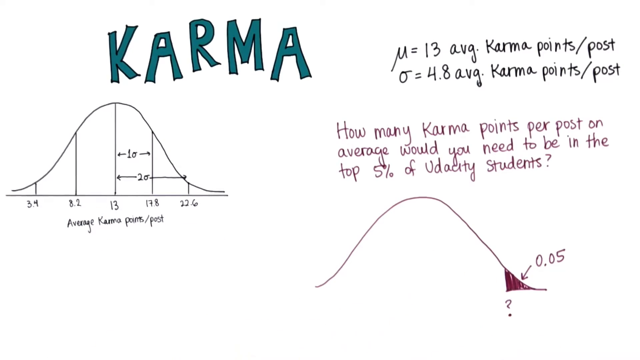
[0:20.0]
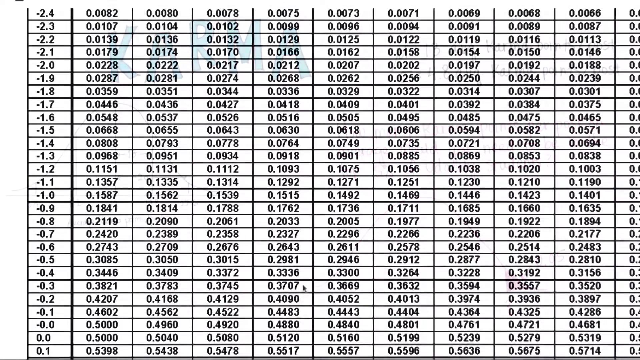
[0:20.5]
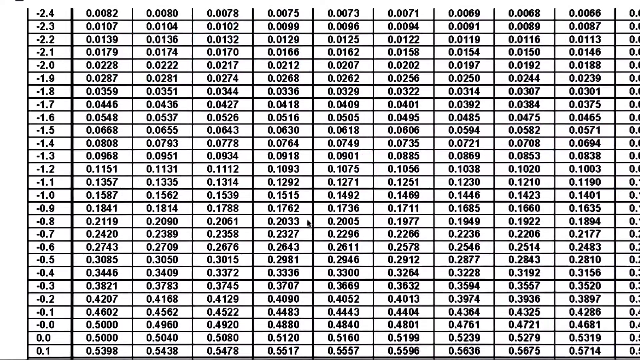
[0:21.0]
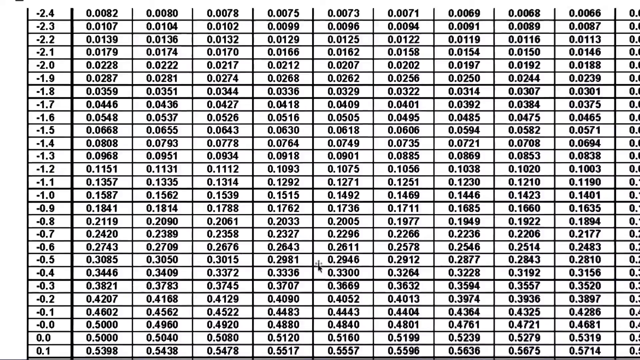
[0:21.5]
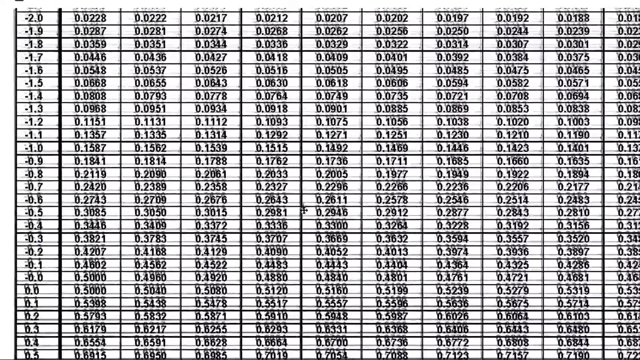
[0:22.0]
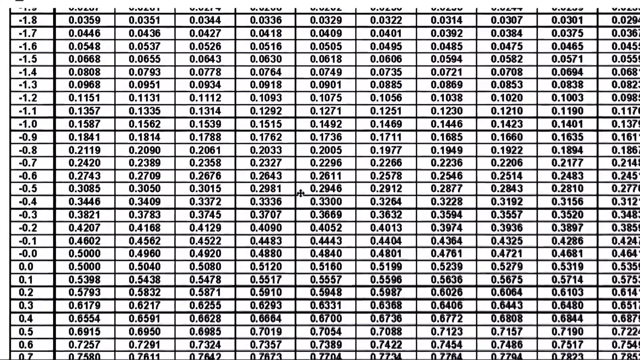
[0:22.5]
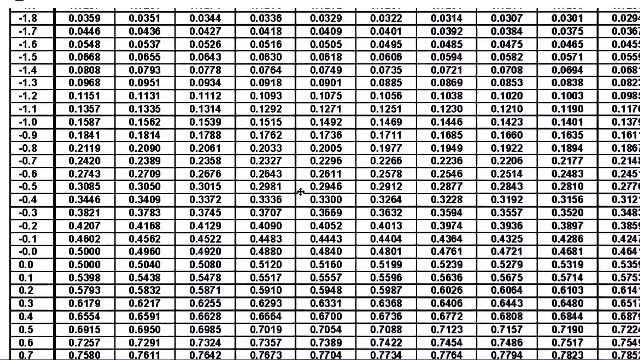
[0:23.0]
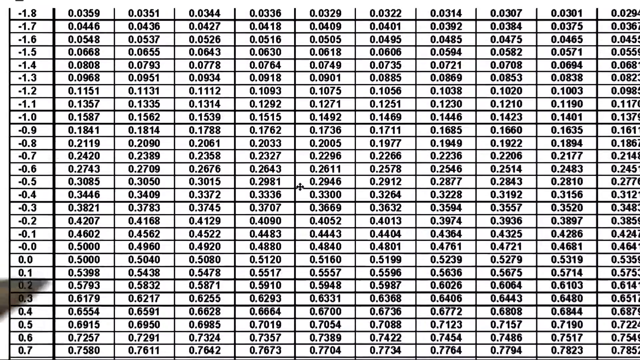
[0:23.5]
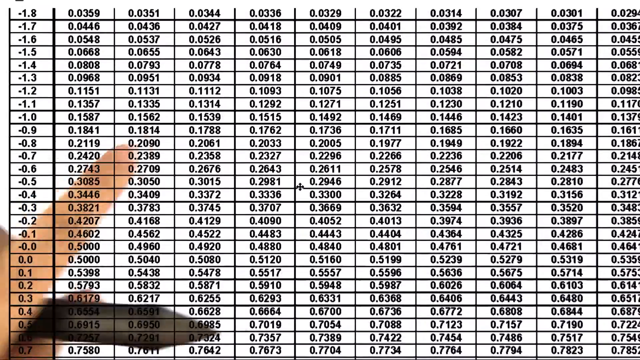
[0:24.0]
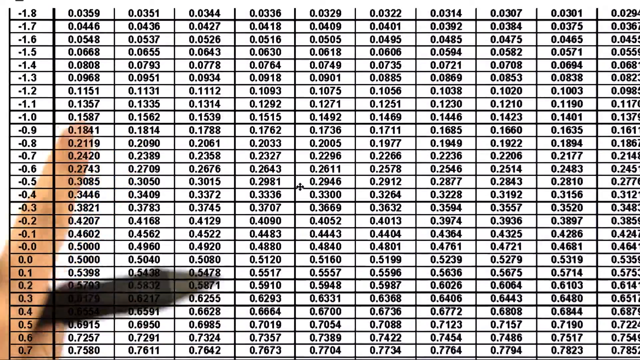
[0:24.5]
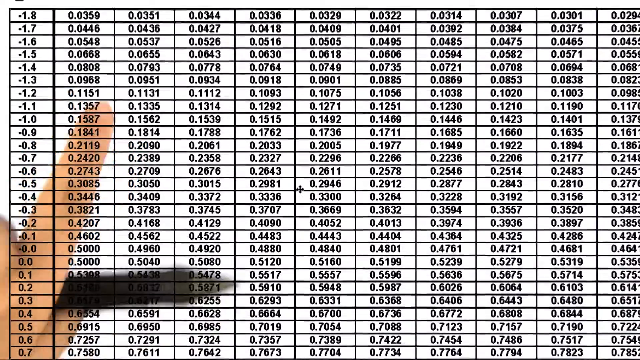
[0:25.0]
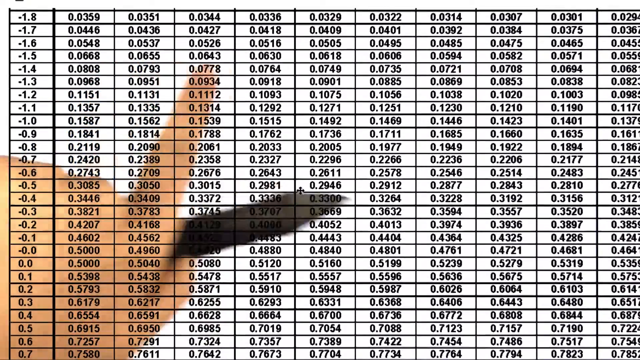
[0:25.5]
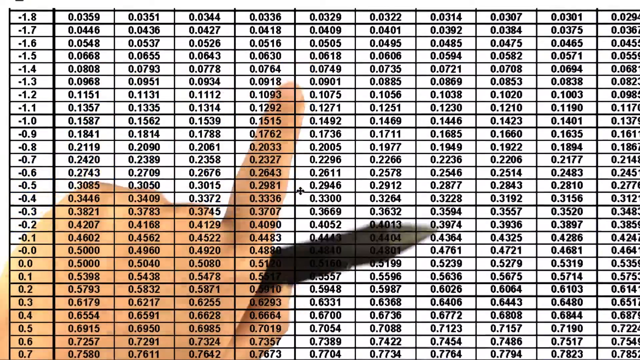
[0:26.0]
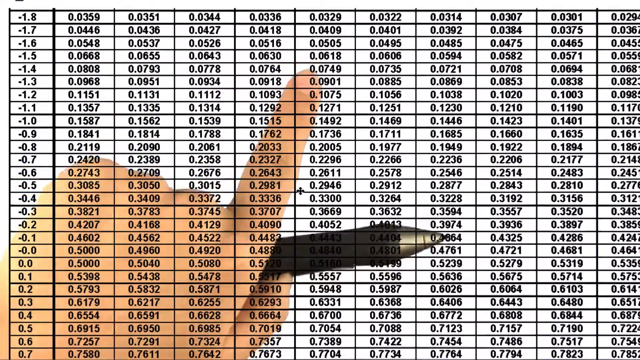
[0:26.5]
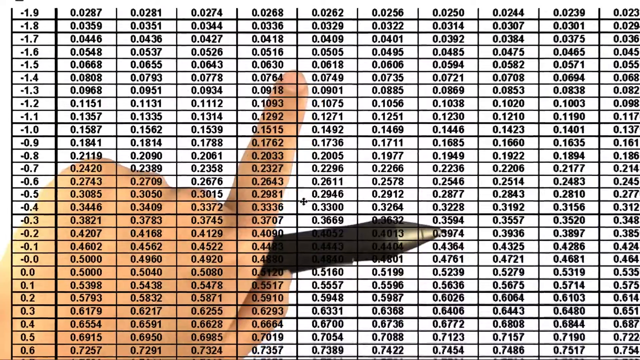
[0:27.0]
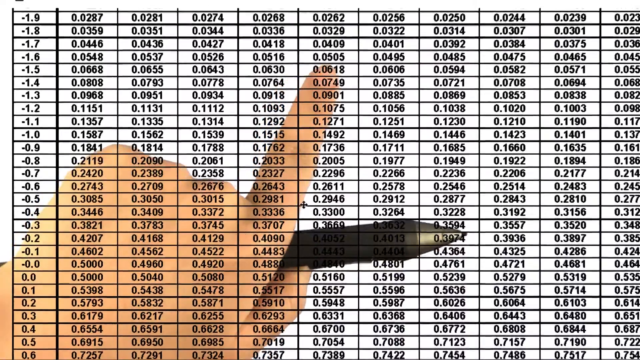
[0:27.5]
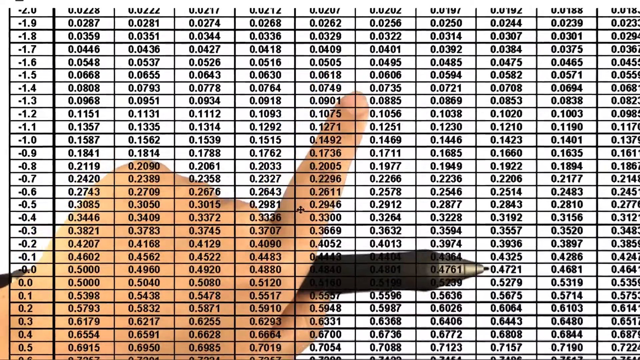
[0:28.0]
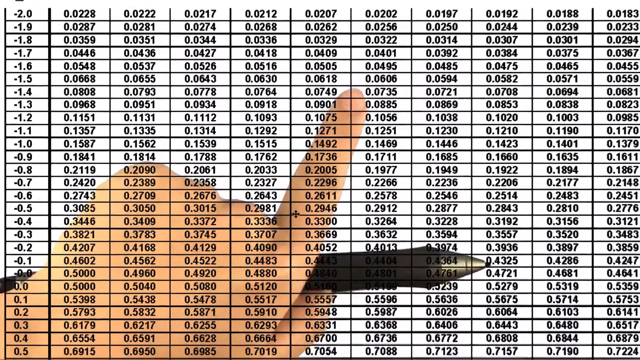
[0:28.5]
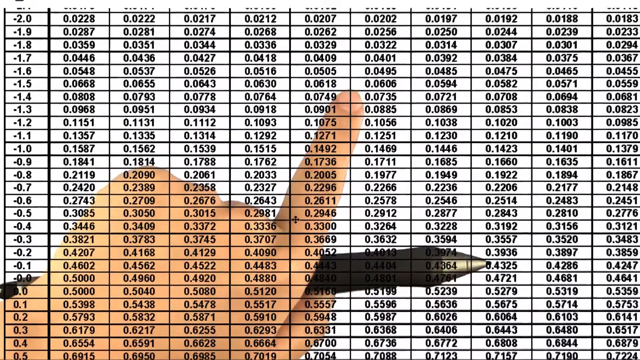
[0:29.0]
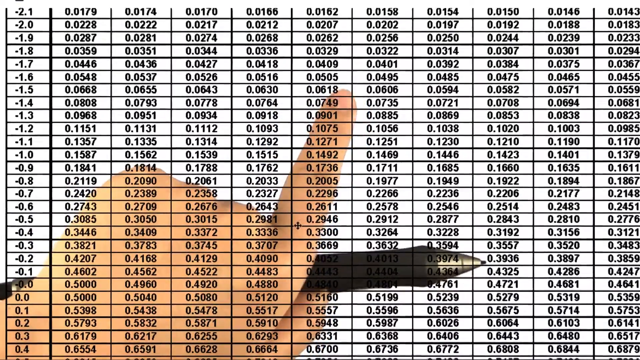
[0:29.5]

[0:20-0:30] The assignment shows the word "karma" in a light blue font. It reads that U equals 14 average karma points and that O is 4.8 average karma points per post, followed by the text "how many karma points per post on average would you need to be in the top 5 of Udacity students." On the left is a graph he created, running from 3.4 to 22.6, with the middle average at 13. He proceeds to draw another graph, marks 0.05 at the bottom right, and then puts down a long sequence of numbers from 0.0359 to 0.722.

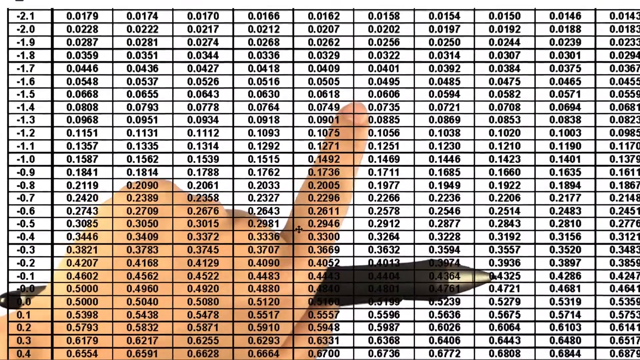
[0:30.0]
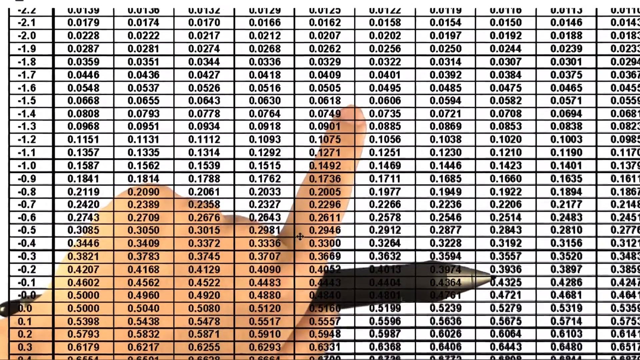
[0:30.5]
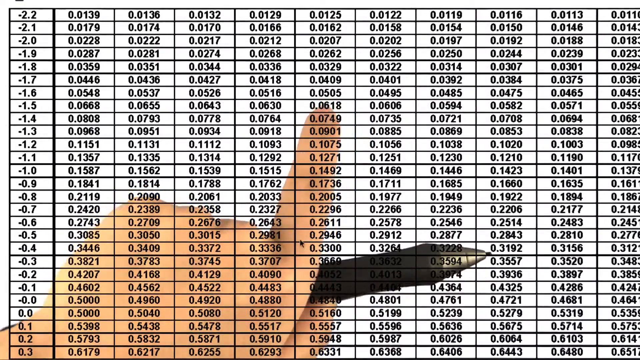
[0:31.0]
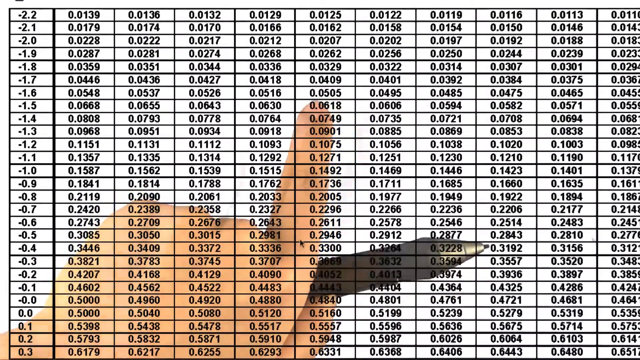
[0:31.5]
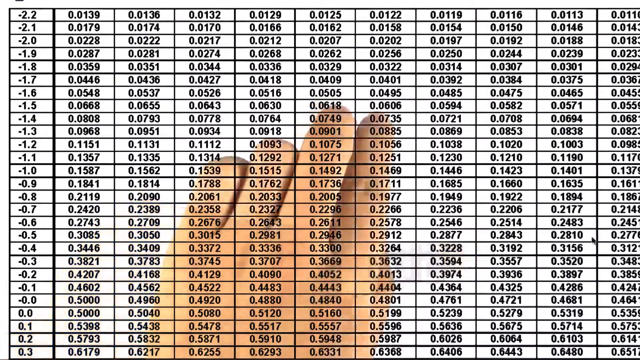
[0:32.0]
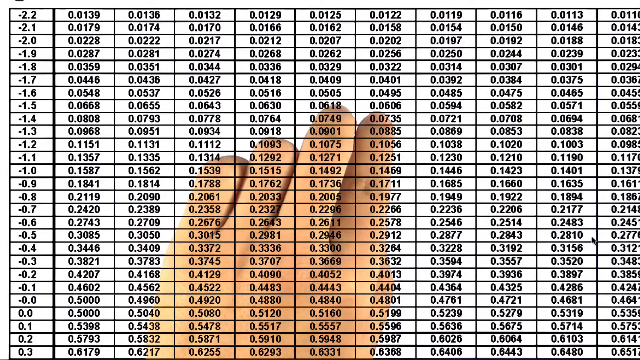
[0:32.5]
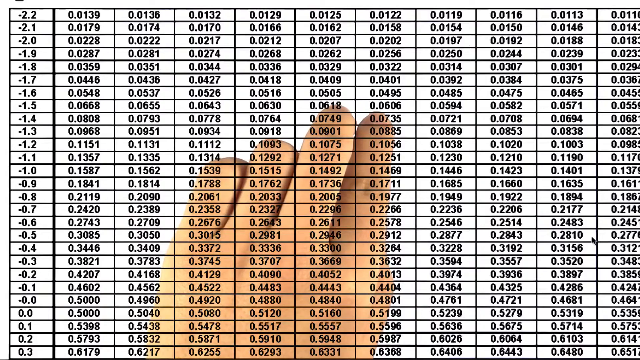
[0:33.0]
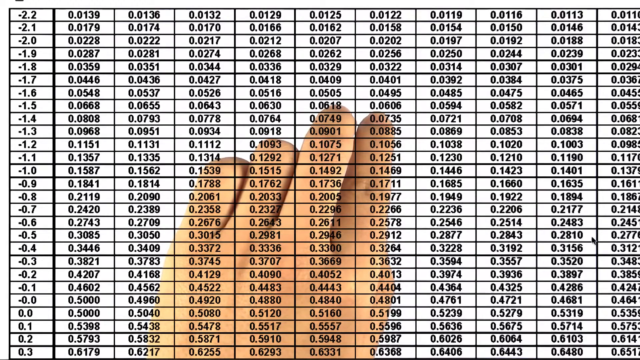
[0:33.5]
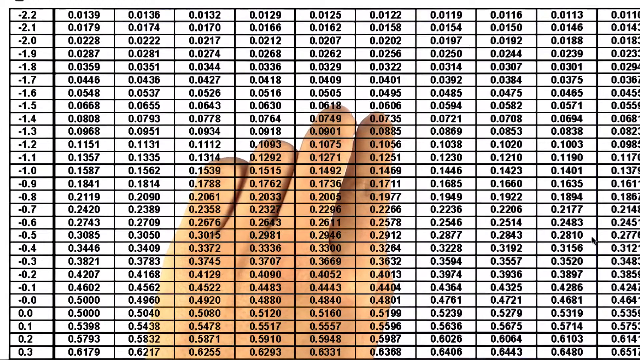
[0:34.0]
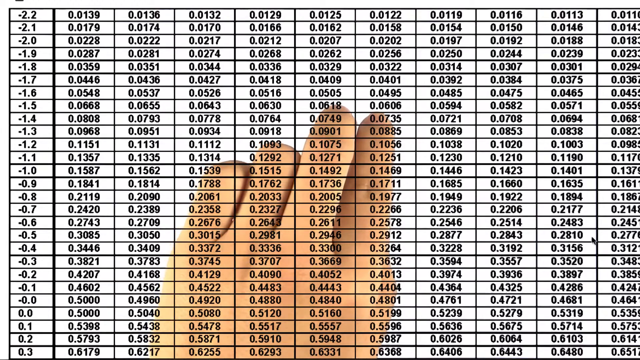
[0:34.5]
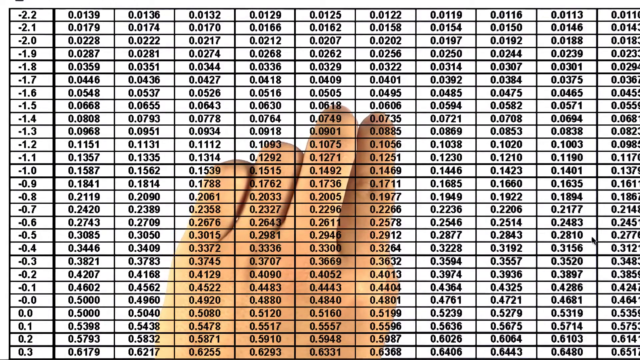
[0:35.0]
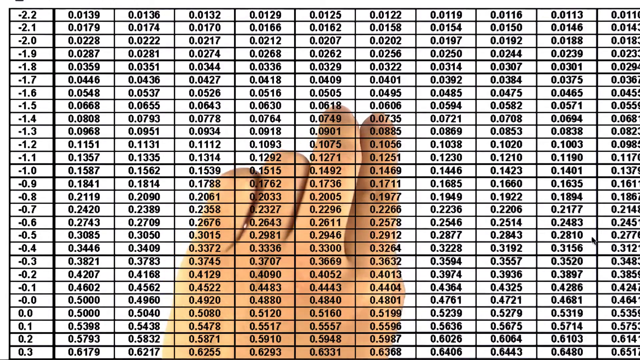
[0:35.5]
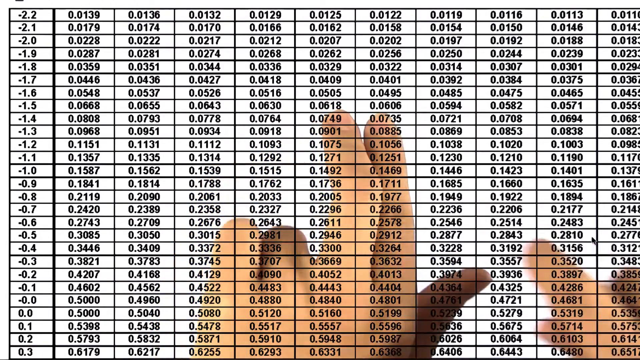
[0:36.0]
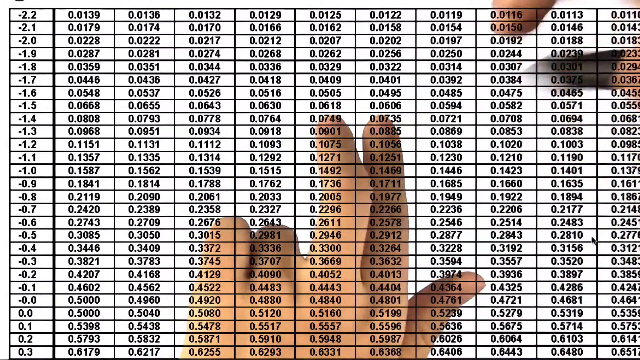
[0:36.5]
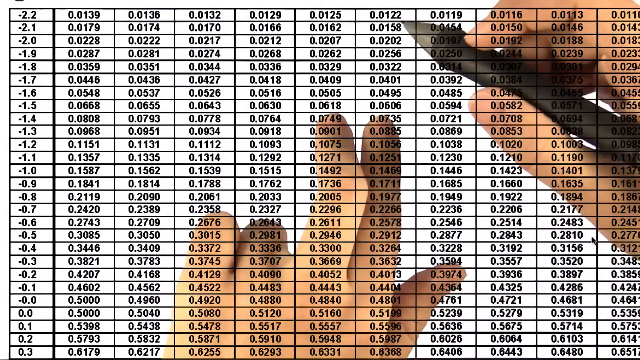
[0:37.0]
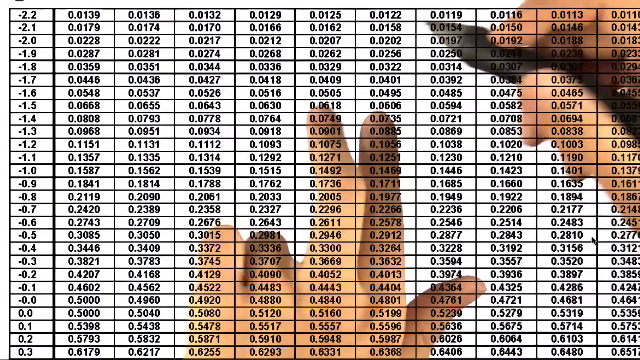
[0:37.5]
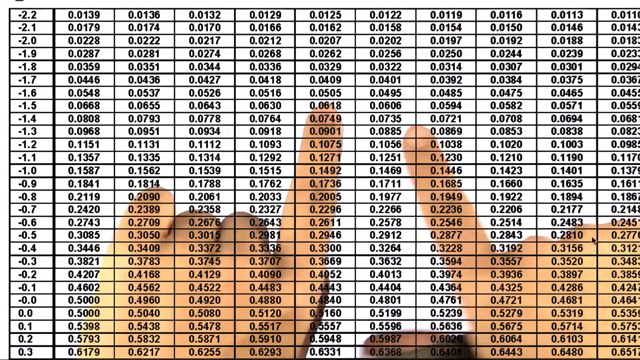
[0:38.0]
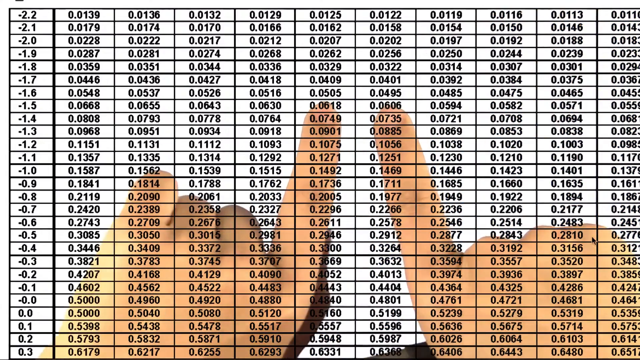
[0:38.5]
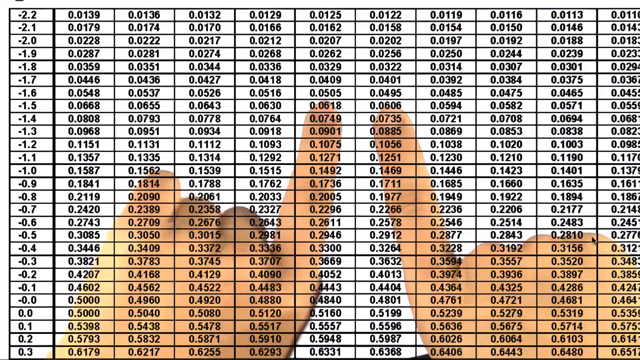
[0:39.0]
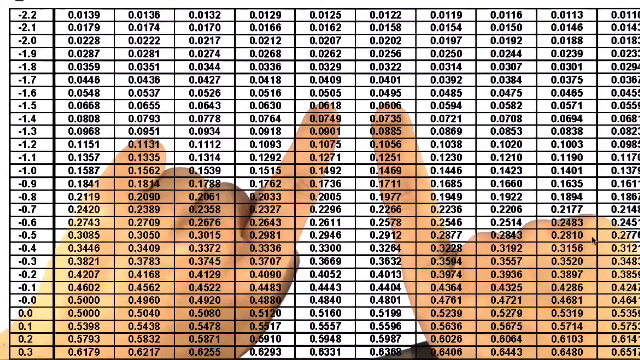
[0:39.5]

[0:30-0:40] A long sequence of numbers fills a table. A person's hand in the center moves behind the numbers, and he pinpoints with his fingers. At first he holds his pen in his left hand; after some time the pen is no longer in his hand. He then points with his other hand, his right hand, and is holding a pen. He points two fingers at the center. The table runs, for example, from minus 2.2 to 0.3, with the lowest number 0.0139 going up to 0.614, and there are over 100 spaces for numbers.